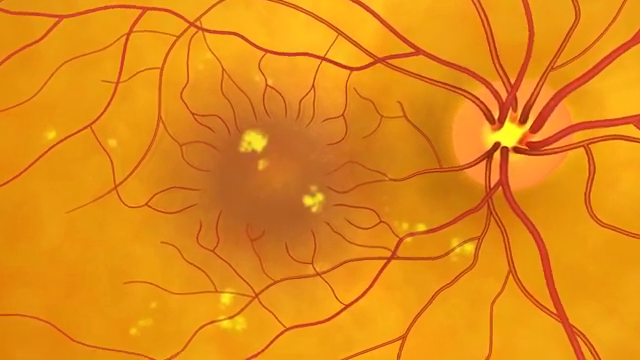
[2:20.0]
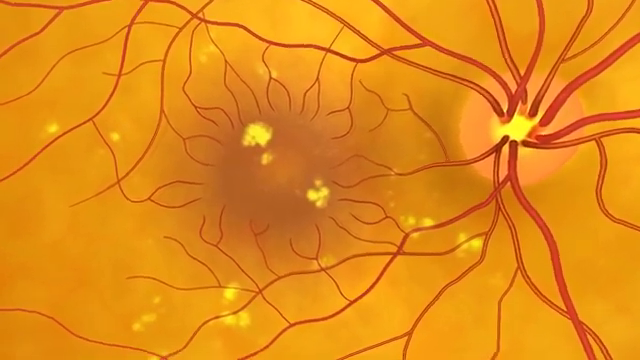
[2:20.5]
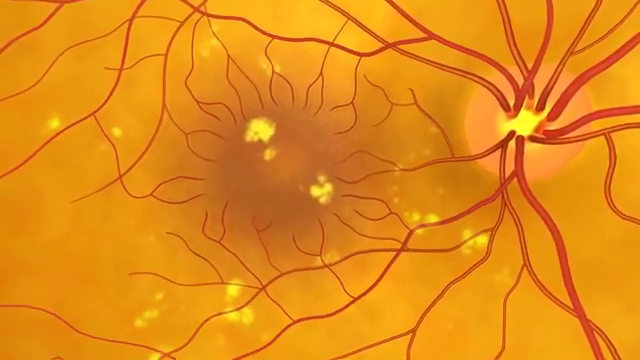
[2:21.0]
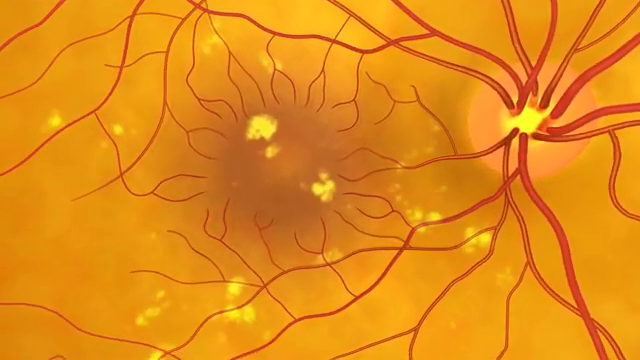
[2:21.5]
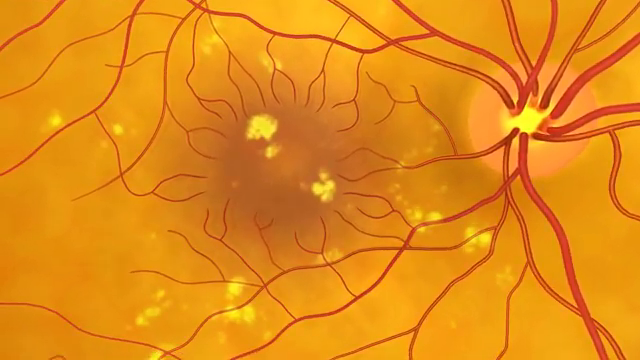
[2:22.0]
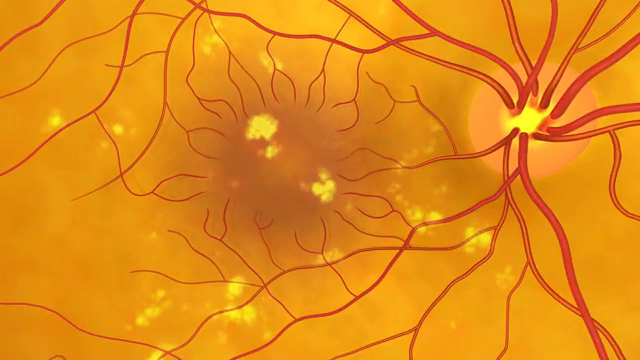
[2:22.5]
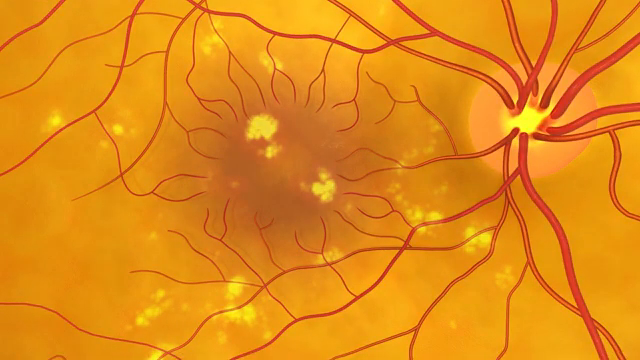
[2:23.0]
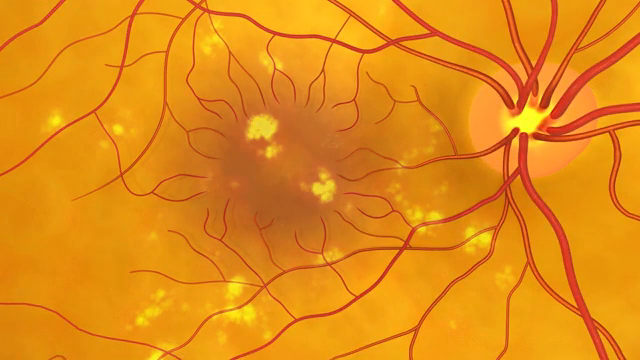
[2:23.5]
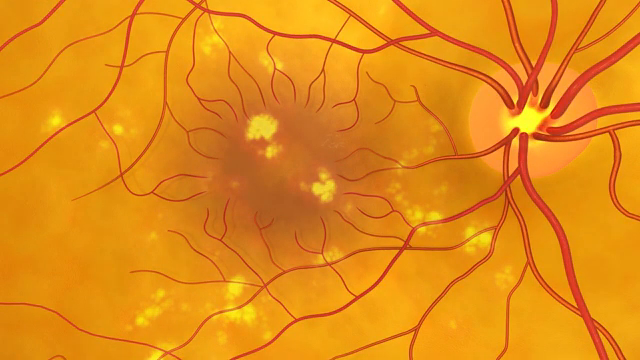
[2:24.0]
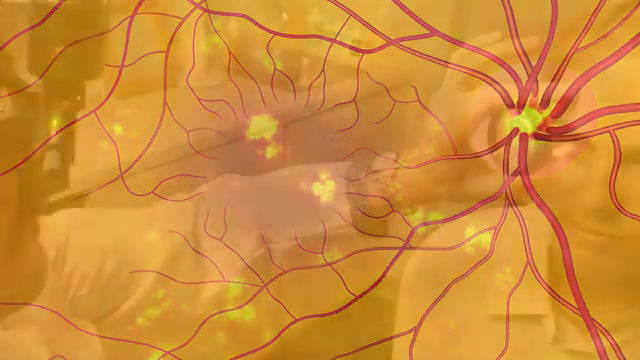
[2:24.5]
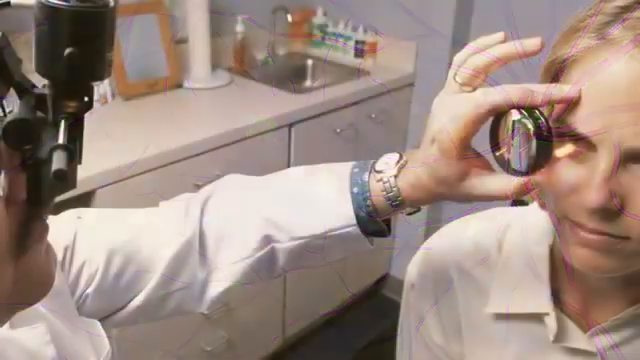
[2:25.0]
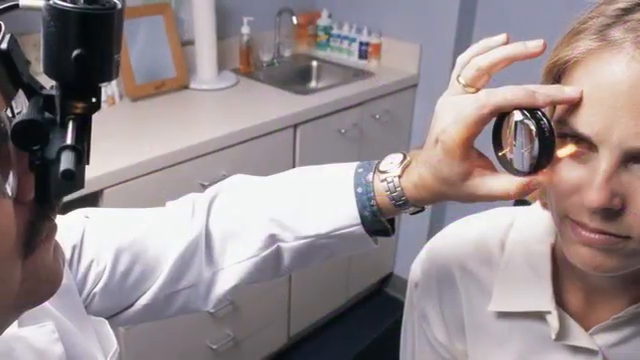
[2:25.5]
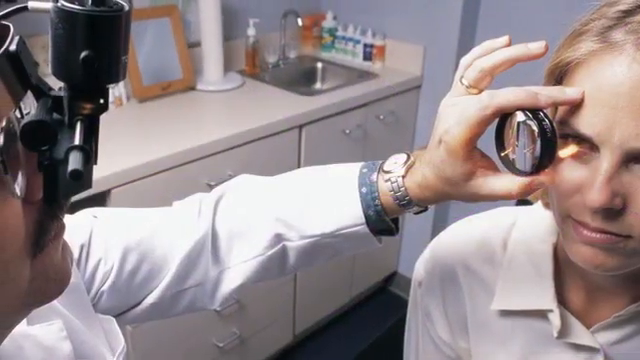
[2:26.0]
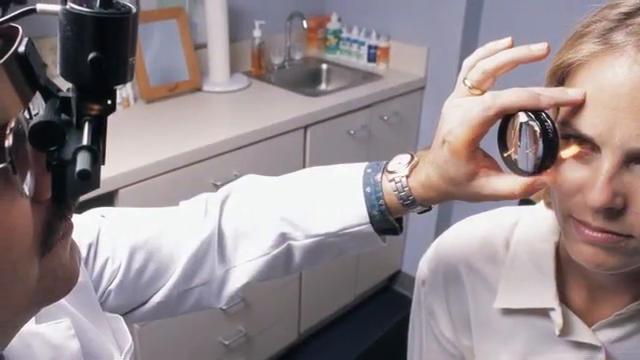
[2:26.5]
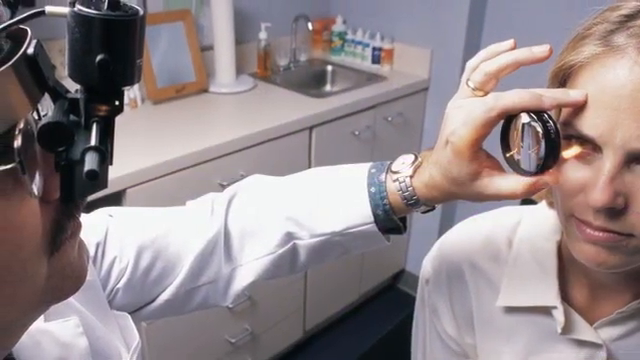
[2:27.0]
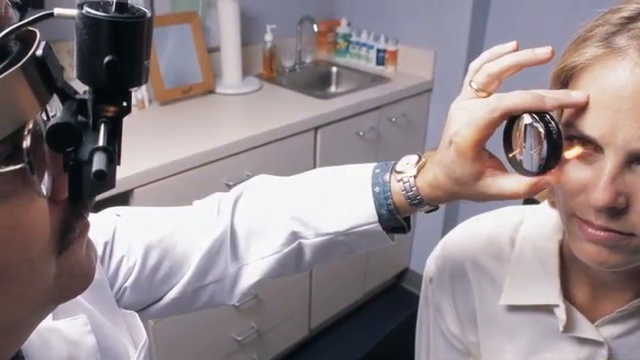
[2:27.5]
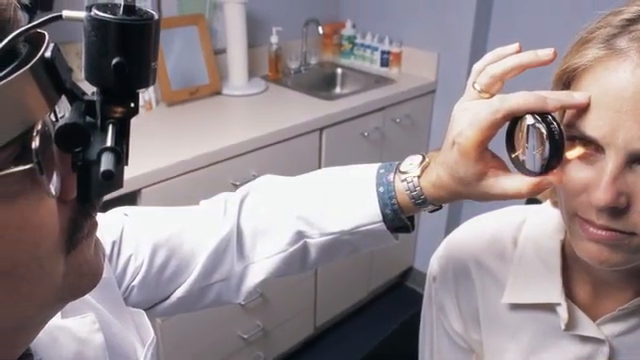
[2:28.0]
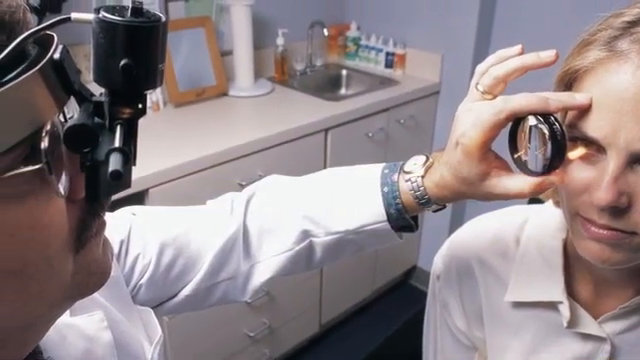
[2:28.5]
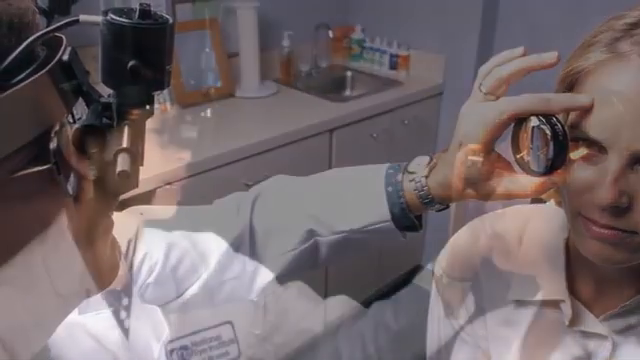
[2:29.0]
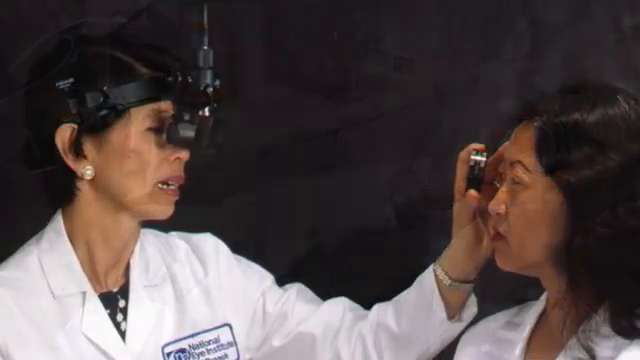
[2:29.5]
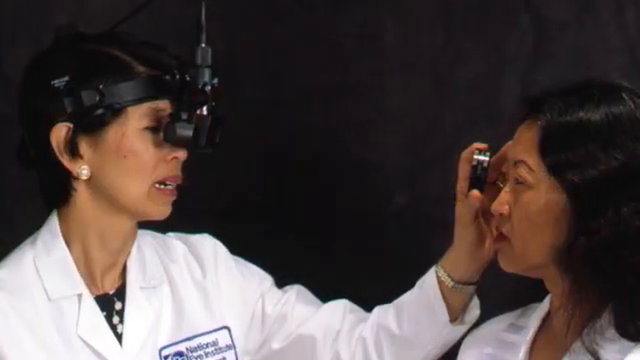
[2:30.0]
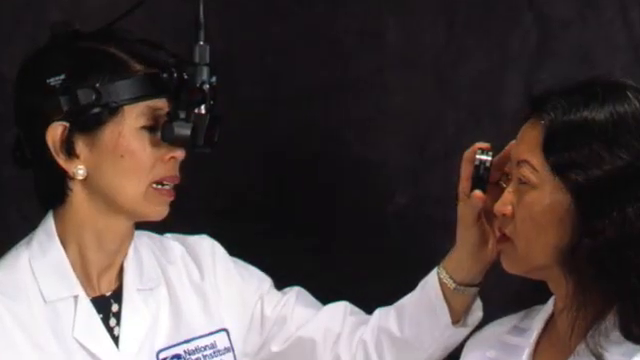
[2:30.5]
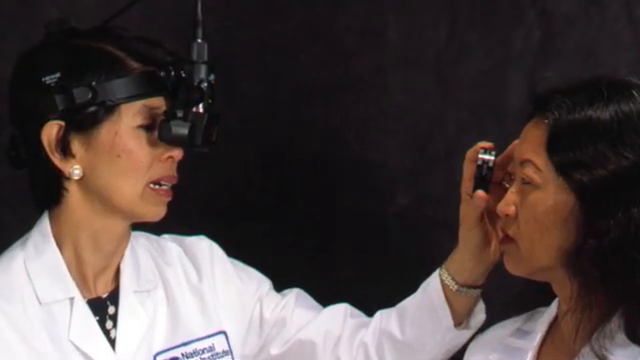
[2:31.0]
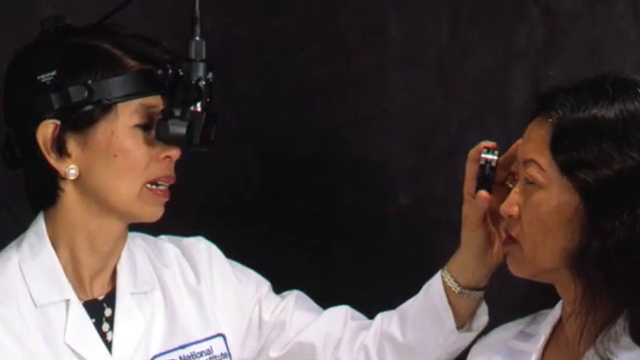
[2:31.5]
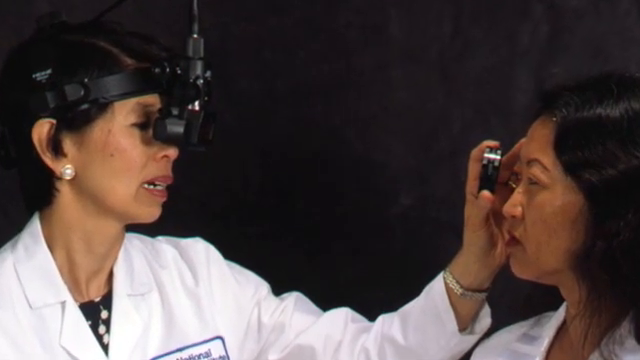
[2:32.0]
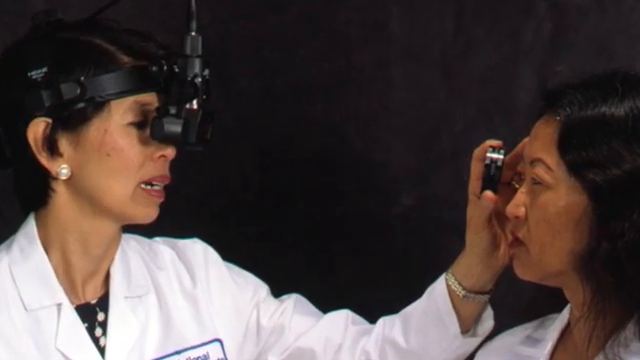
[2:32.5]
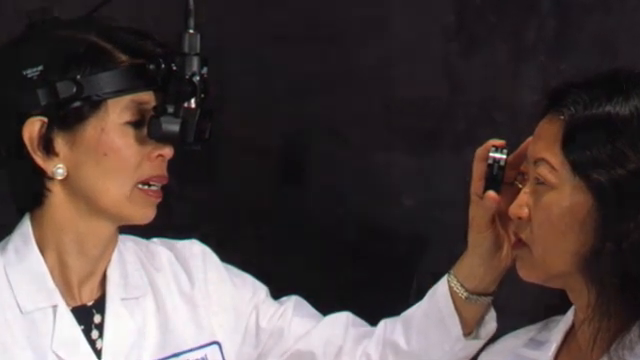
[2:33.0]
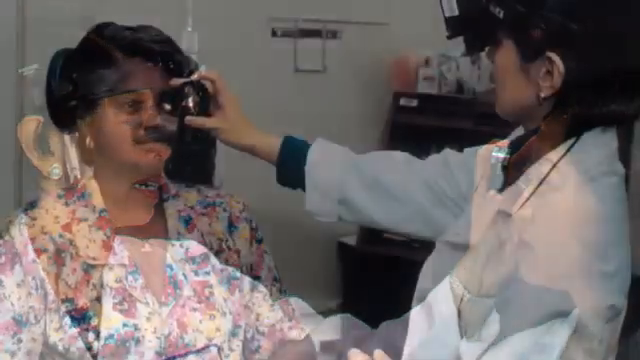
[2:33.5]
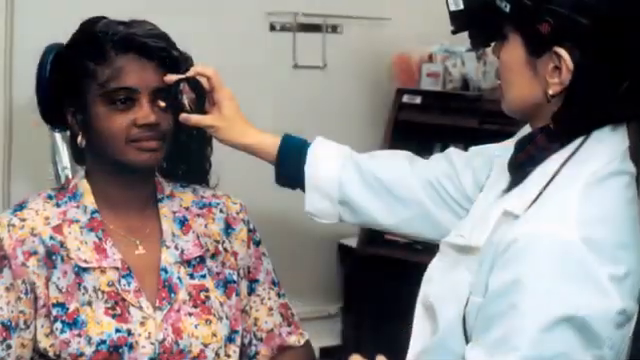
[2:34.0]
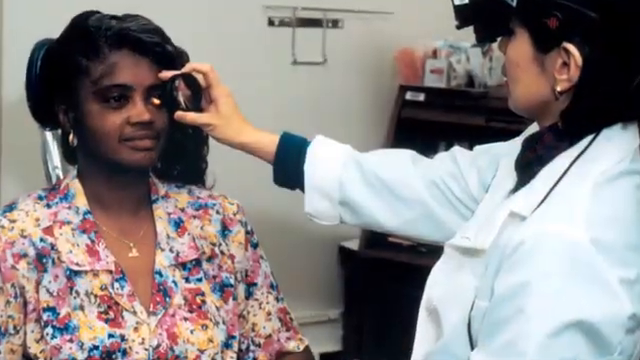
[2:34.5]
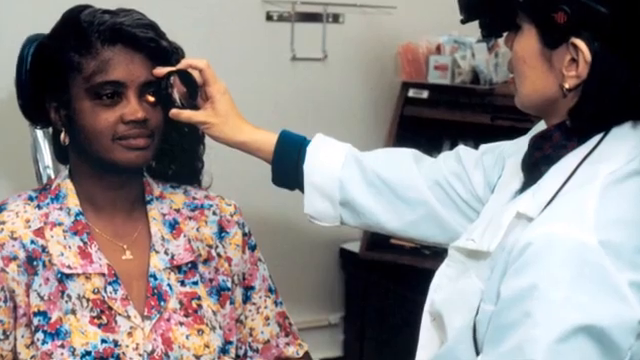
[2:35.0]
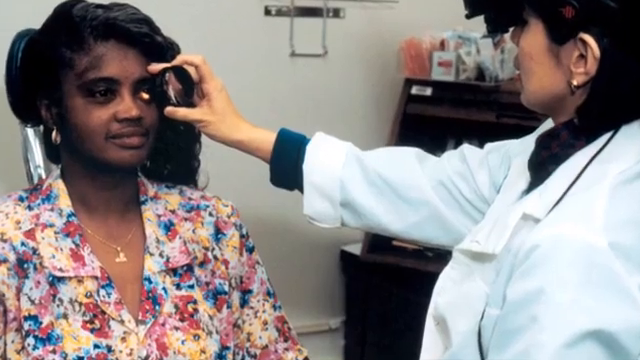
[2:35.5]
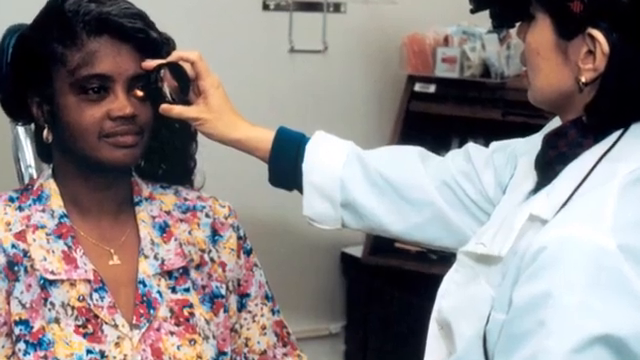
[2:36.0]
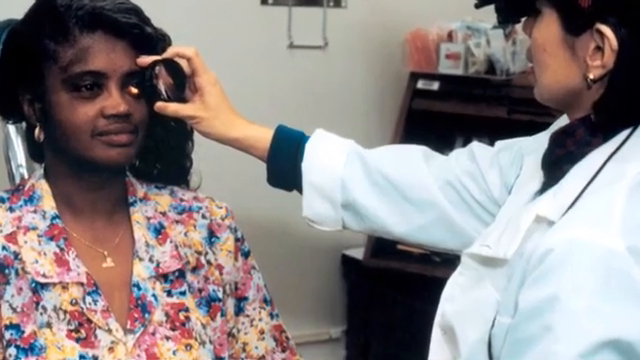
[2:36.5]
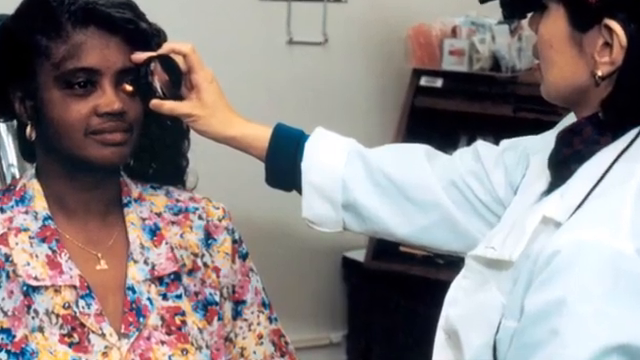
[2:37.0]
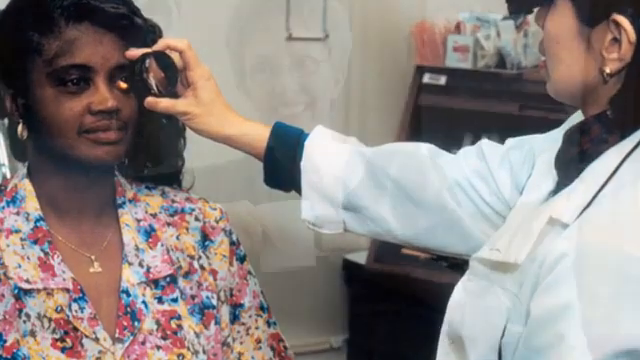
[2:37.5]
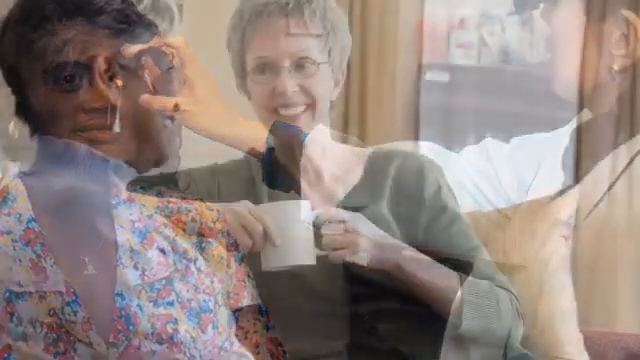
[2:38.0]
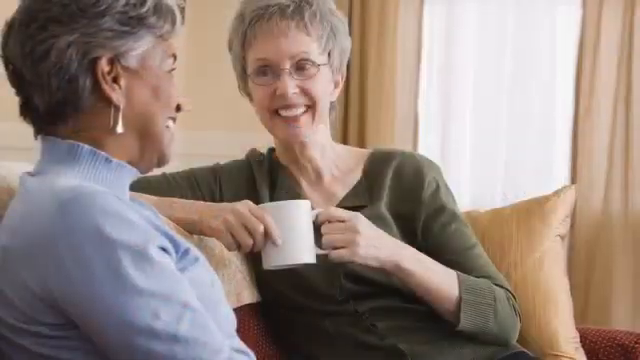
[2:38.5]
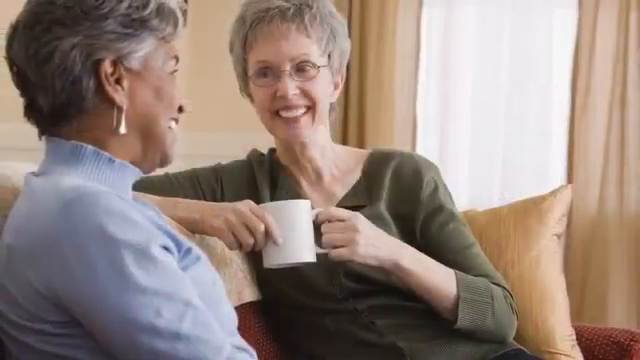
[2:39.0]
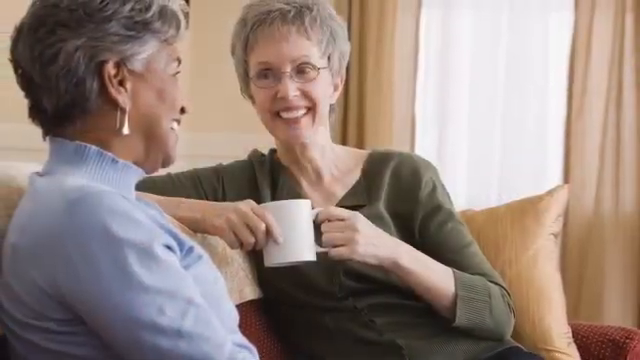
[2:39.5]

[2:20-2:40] Blood vessels enter and exit different areas of the eye. The video then quickly transitions to various doctors, such as ophthalmologists, using various tools to examine the eyes of different people. The doctors are happy.